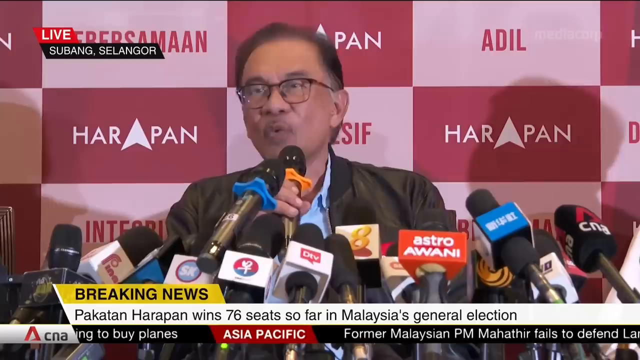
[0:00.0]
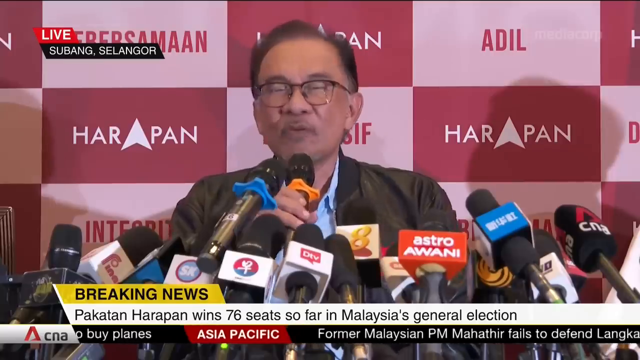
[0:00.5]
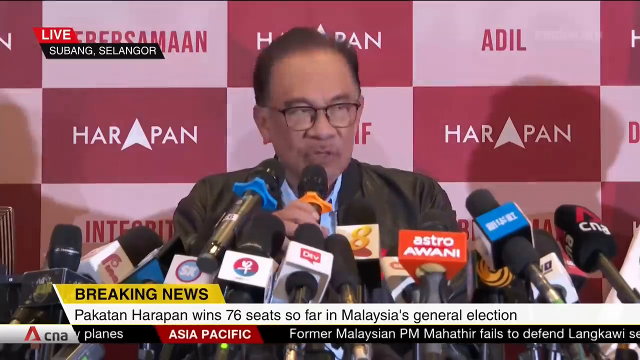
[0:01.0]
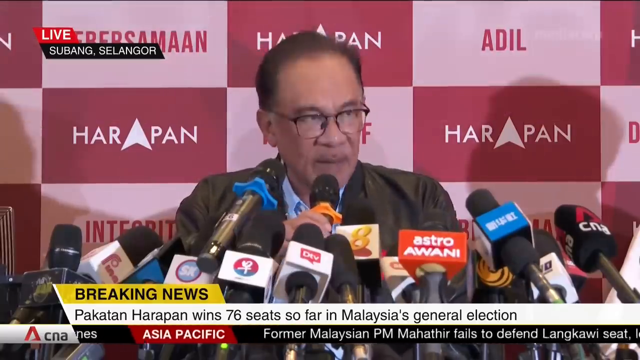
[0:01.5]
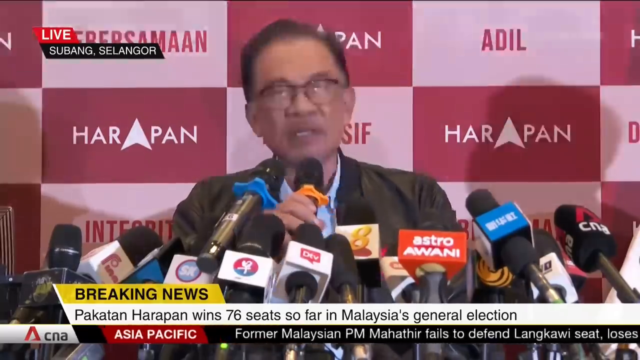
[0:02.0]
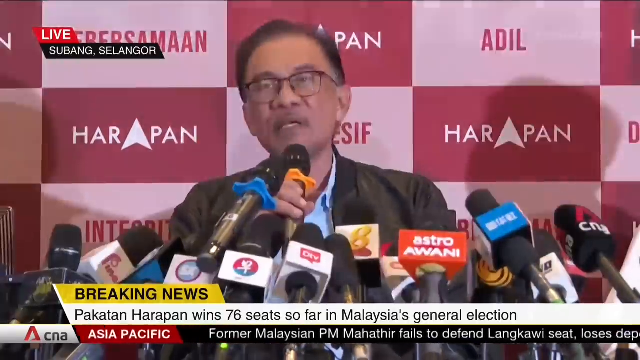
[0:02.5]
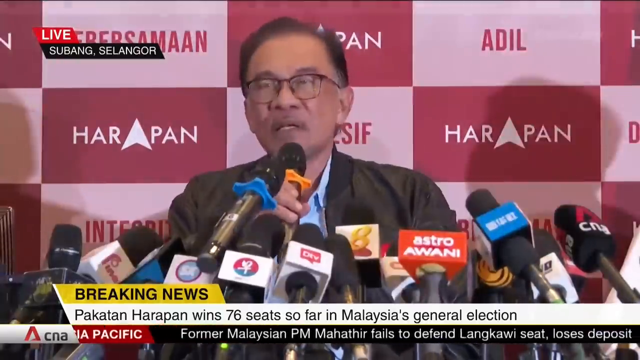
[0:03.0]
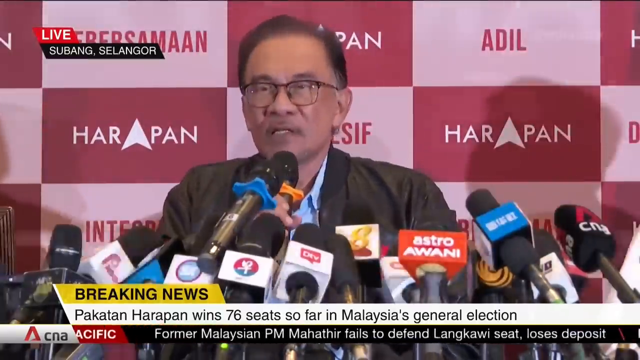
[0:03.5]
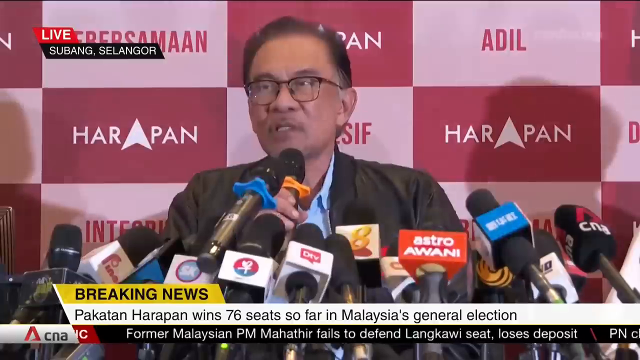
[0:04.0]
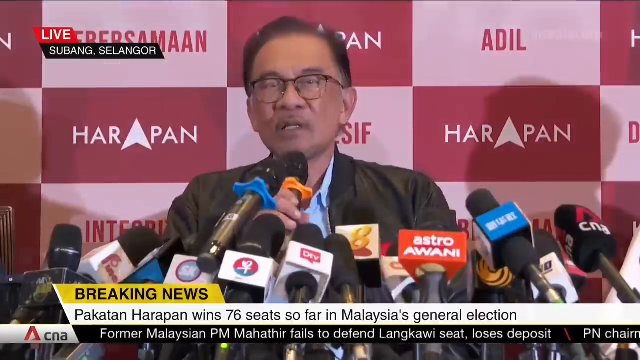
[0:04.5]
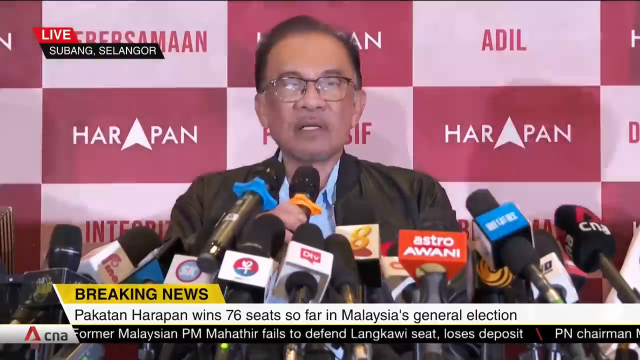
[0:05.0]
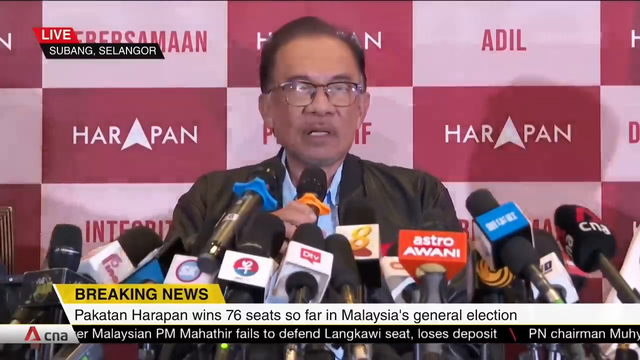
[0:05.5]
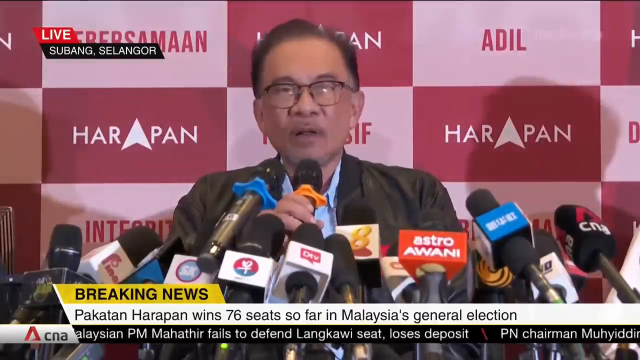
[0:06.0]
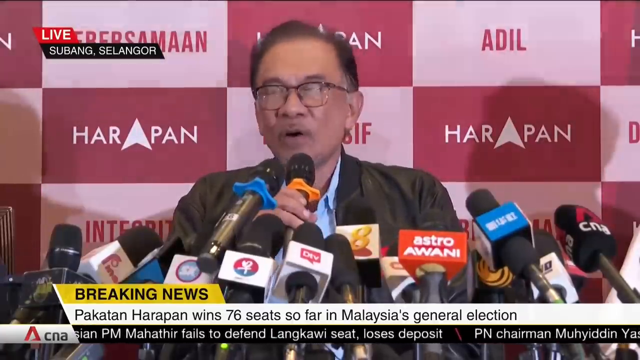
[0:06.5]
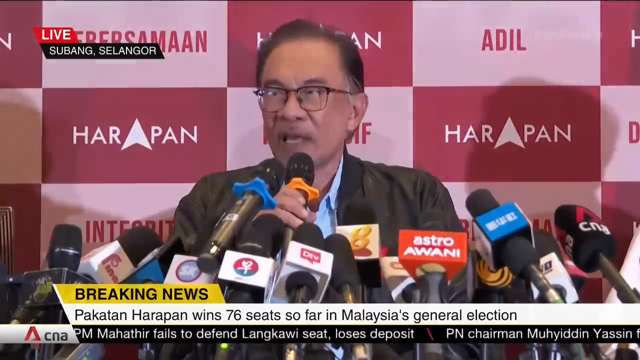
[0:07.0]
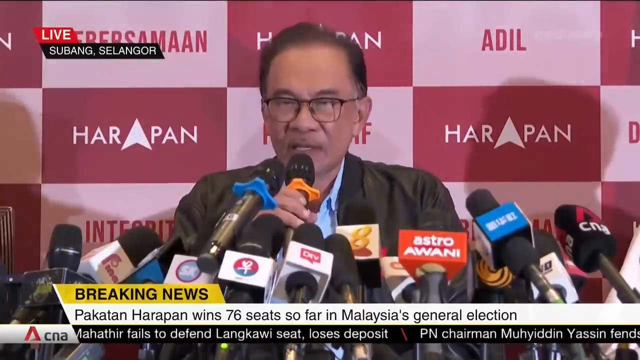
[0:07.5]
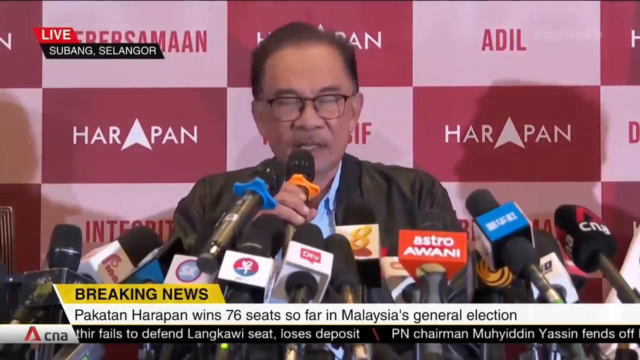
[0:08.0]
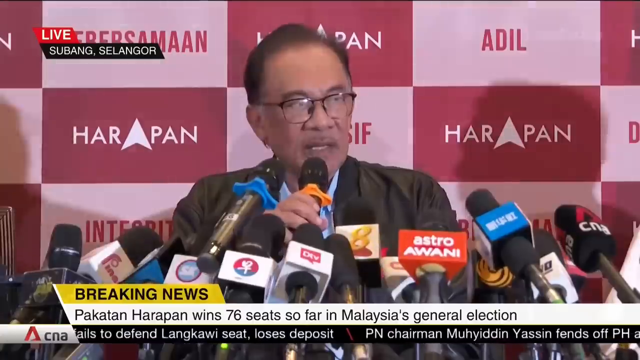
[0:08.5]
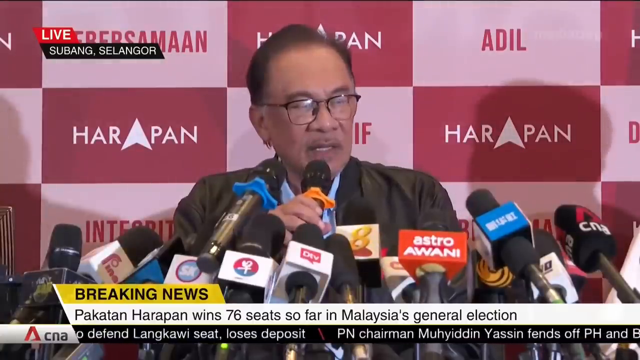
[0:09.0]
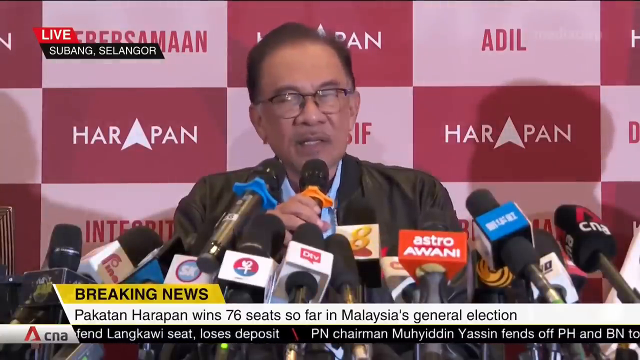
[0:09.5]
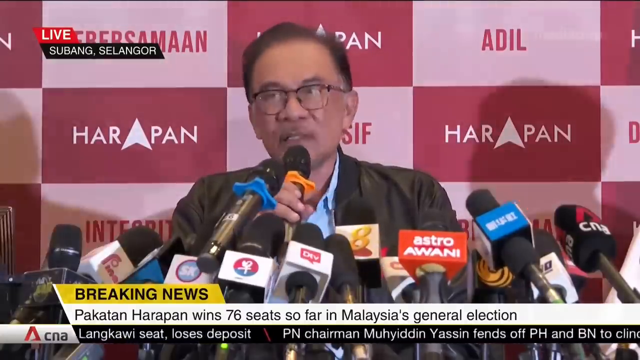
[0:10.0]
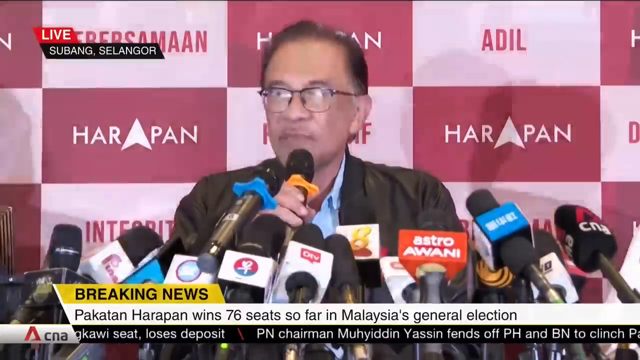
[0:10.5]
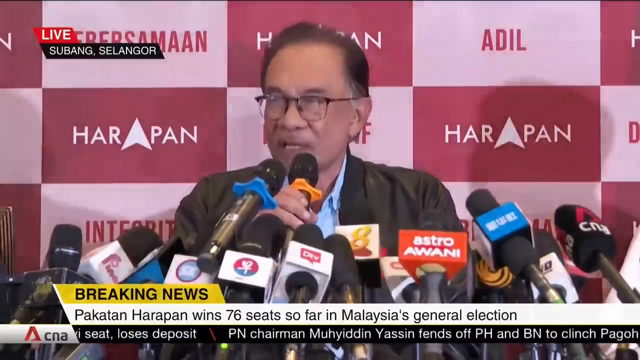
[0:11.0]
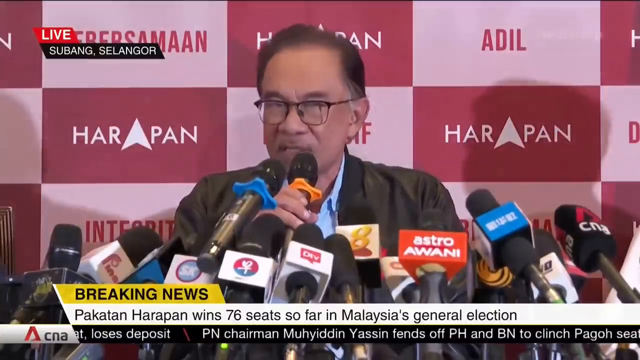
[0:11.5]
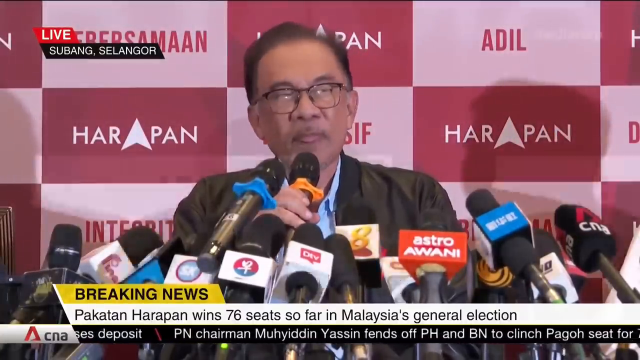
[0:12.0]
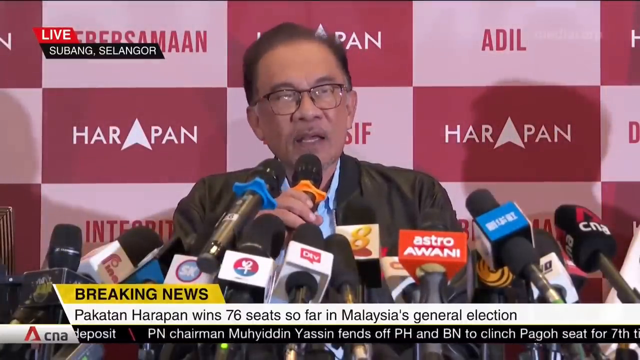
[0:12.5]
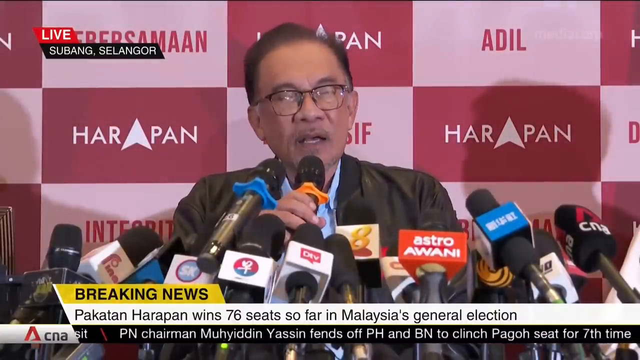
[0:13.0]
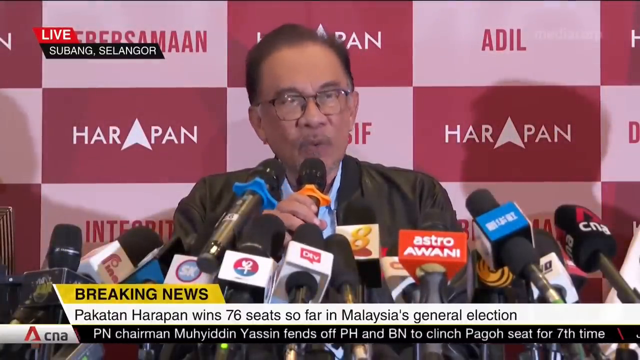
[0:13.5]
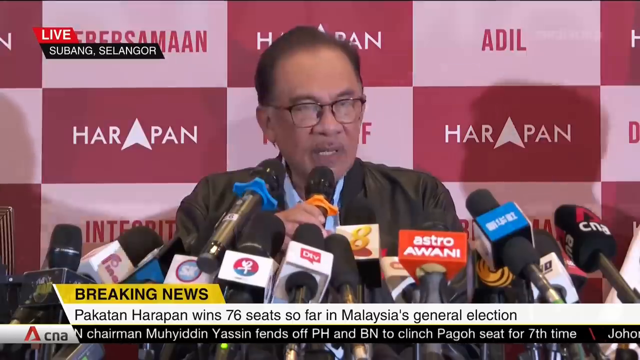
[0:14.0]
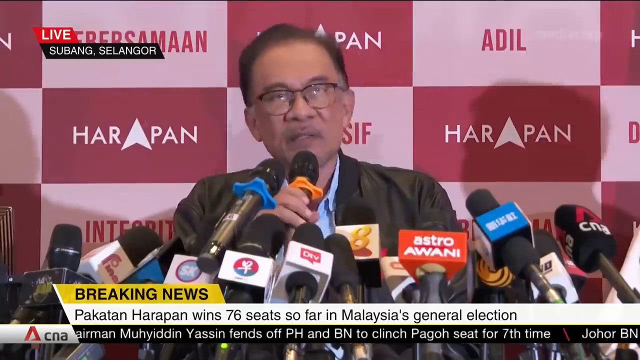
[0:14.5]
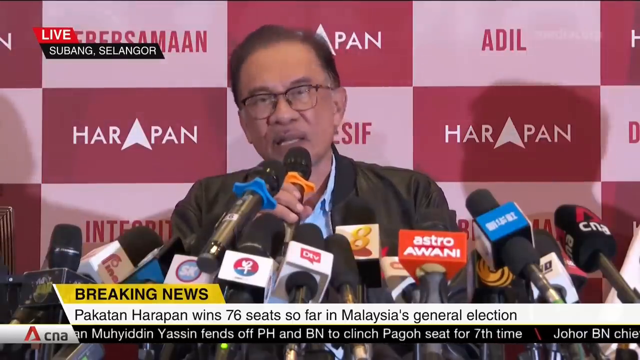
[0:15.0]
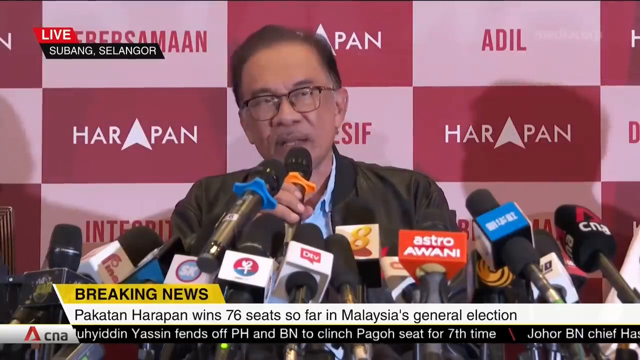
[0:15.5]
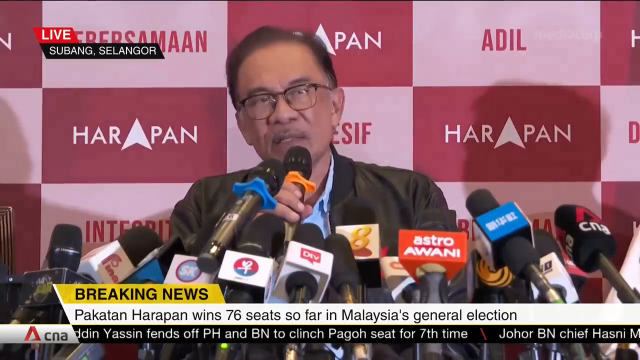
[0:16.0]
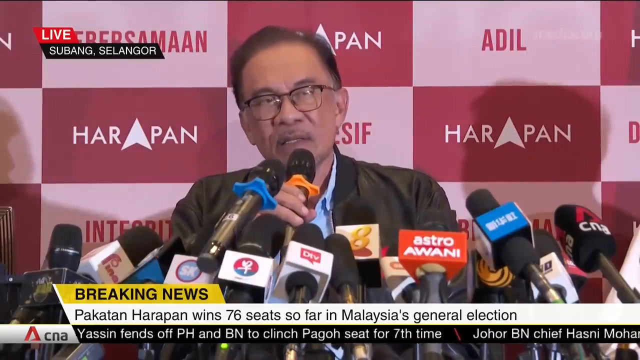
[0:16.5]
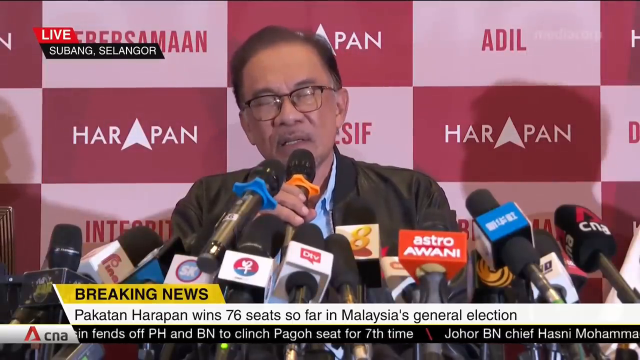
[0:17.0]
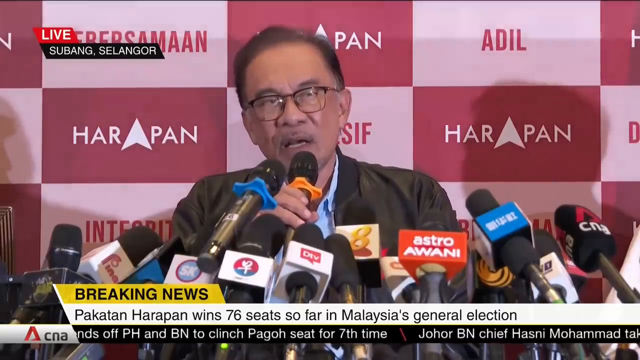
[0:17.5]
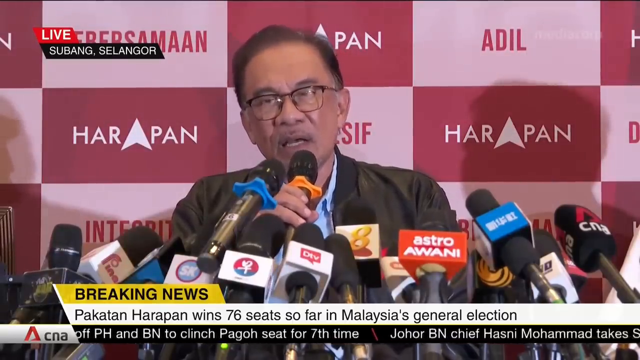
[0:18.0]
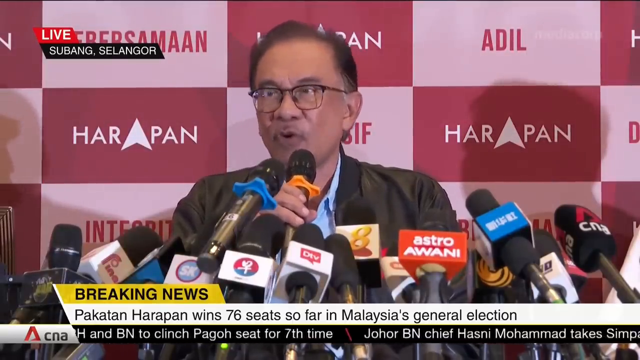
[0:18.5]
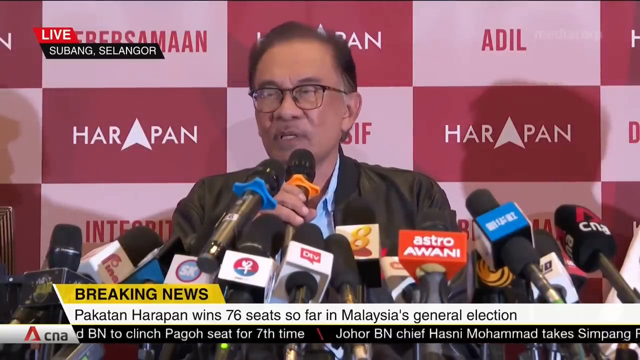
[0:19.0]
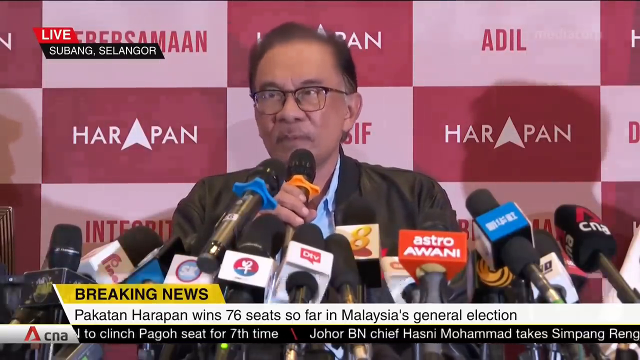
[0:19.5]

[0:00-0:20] A live news broadcast from Subang Selangor carries a "Breaking news" banner reading "Pakatan Harapan wins 76 seats so far in Malaysia's general election." A scroll beneath it reads "PN Chairman Yasser fends off PH and BN to clinch the seat for the seventh time." A person is speaking at a news conference in front of probably 10 to 12 microphones.